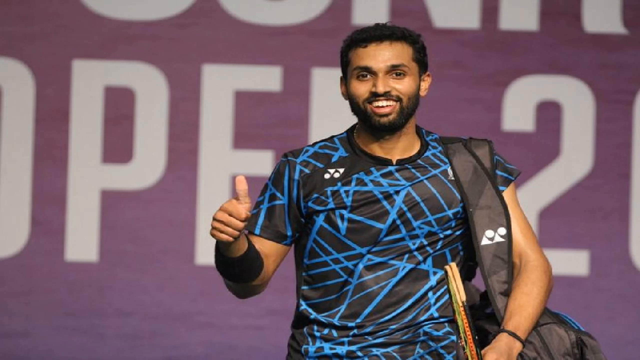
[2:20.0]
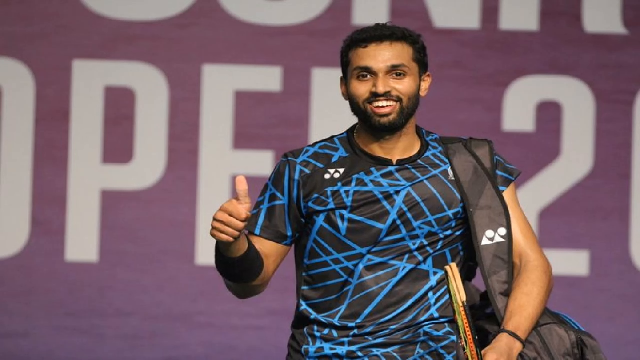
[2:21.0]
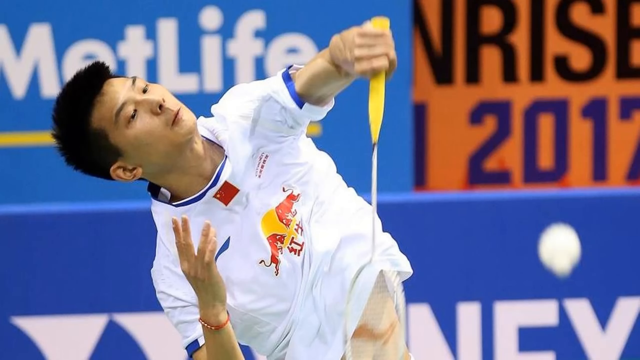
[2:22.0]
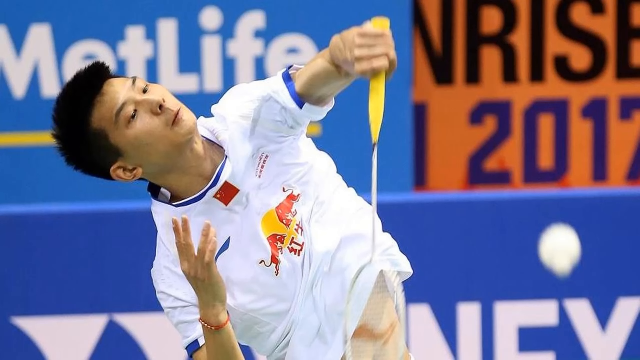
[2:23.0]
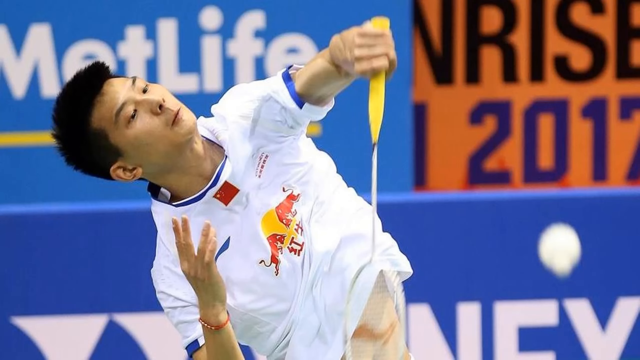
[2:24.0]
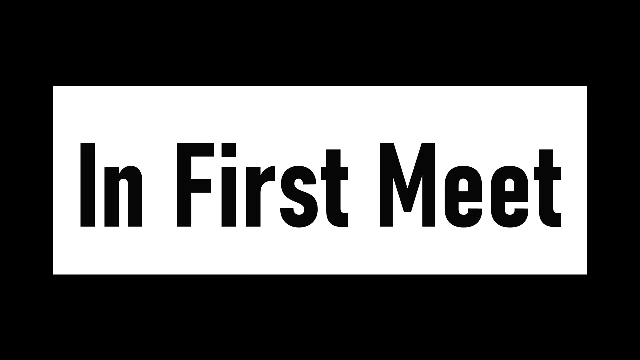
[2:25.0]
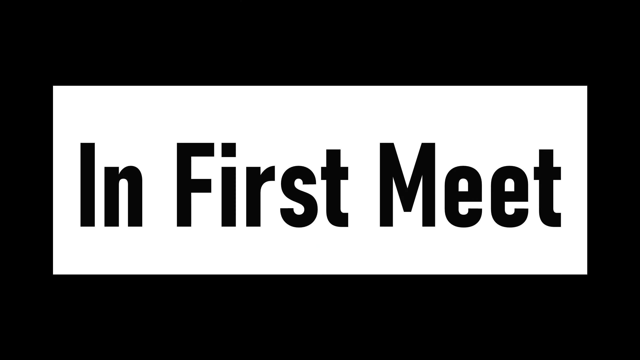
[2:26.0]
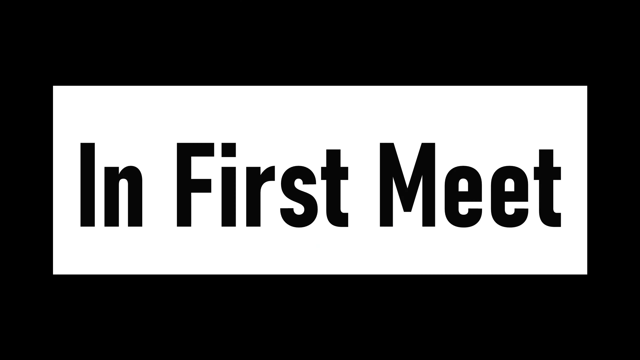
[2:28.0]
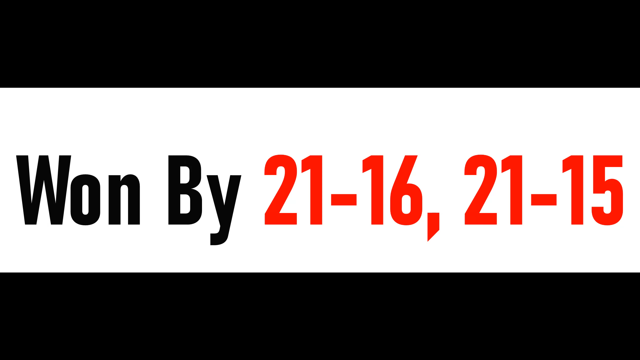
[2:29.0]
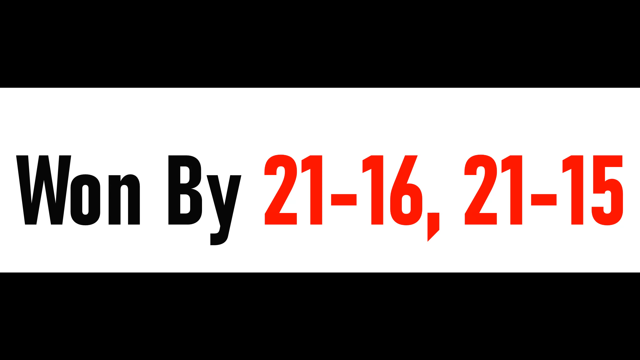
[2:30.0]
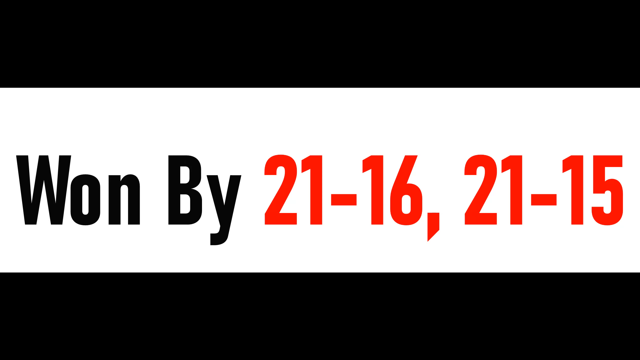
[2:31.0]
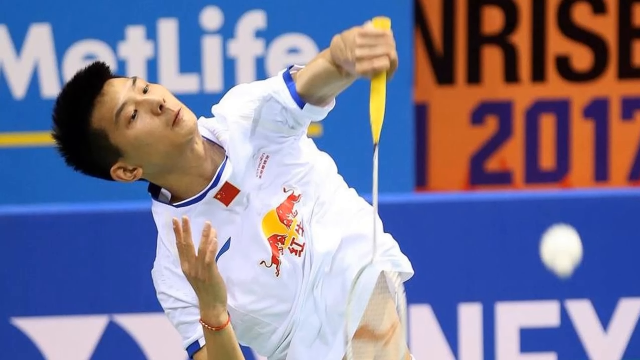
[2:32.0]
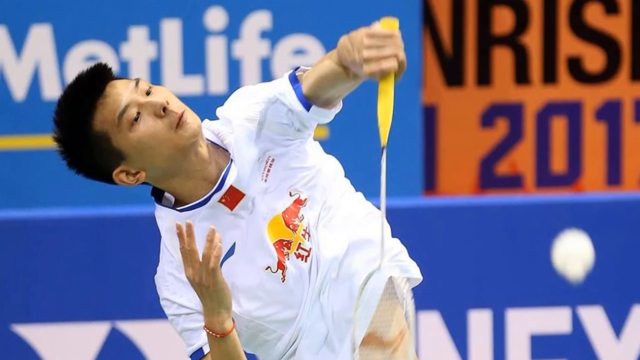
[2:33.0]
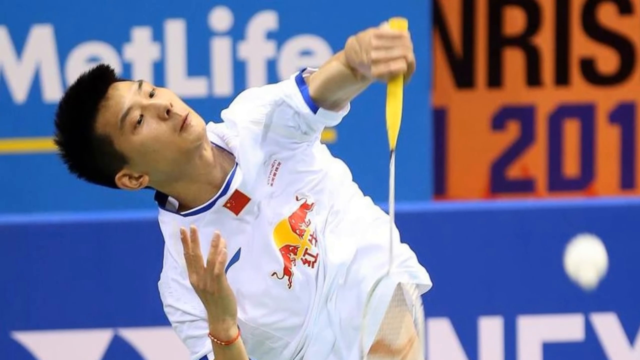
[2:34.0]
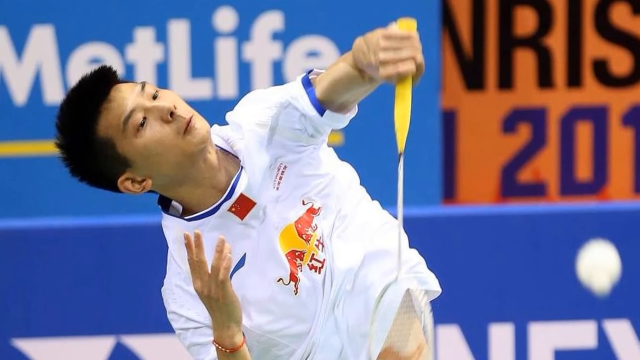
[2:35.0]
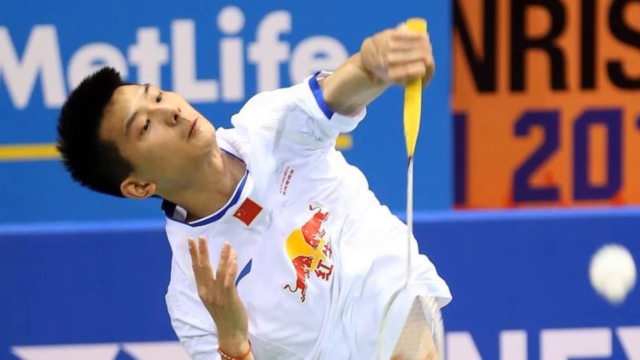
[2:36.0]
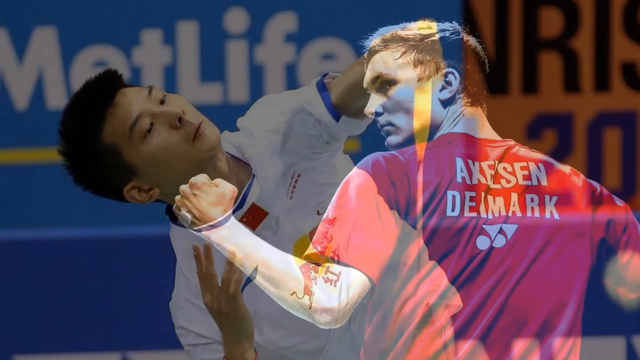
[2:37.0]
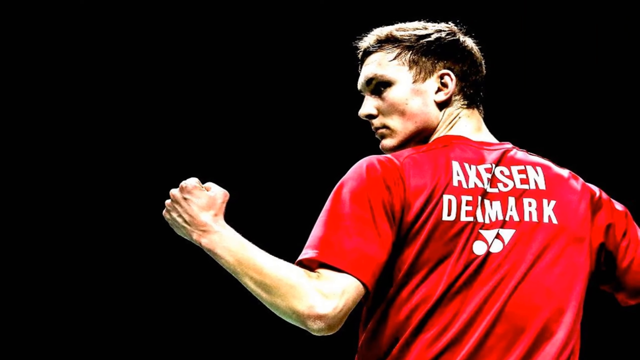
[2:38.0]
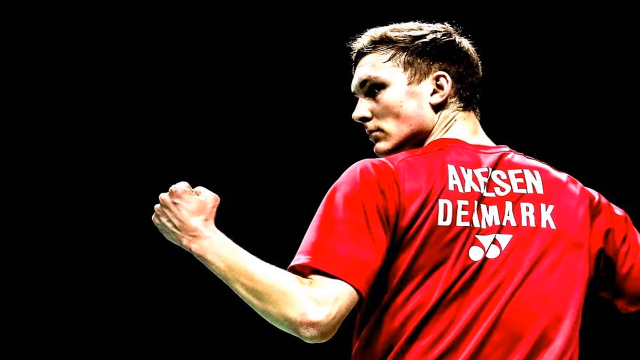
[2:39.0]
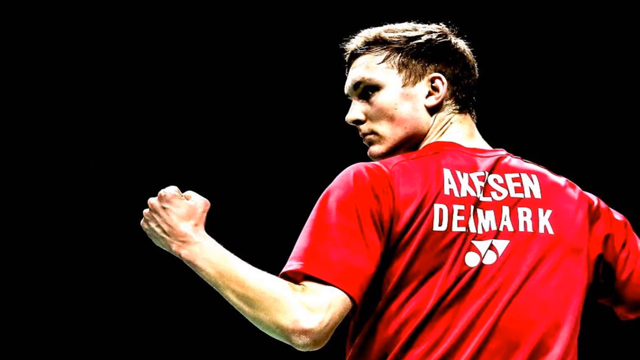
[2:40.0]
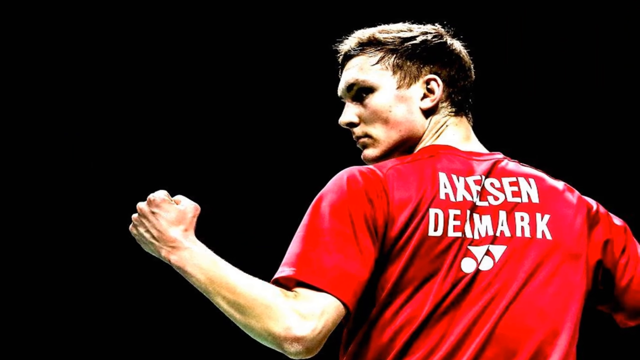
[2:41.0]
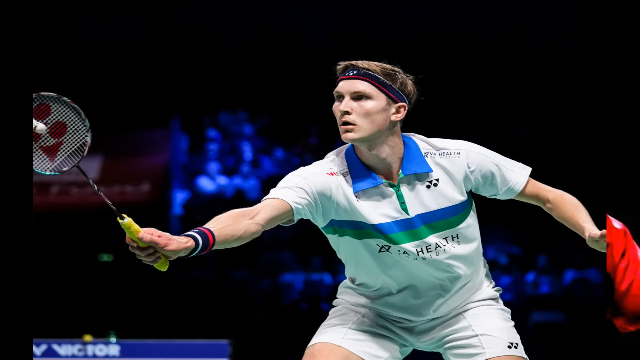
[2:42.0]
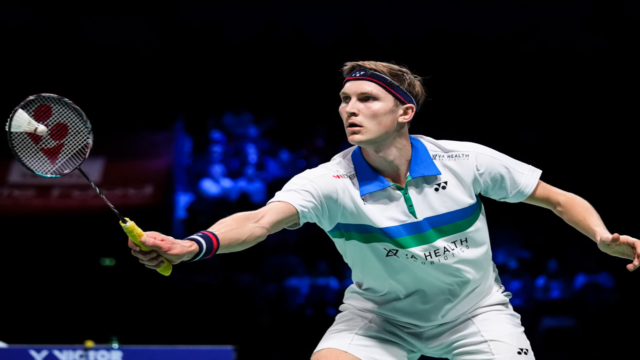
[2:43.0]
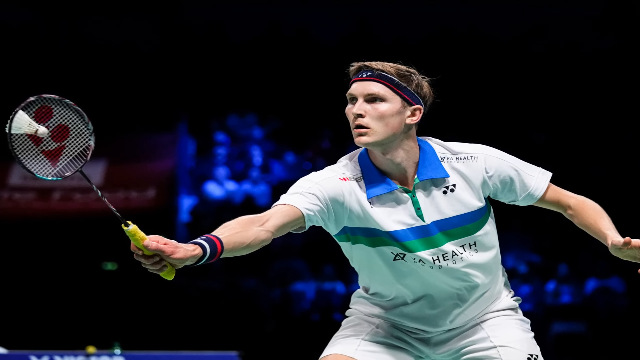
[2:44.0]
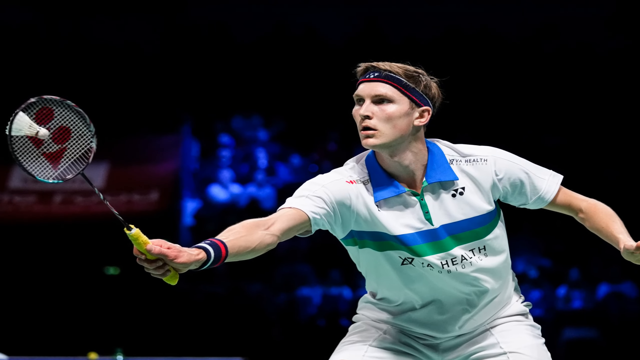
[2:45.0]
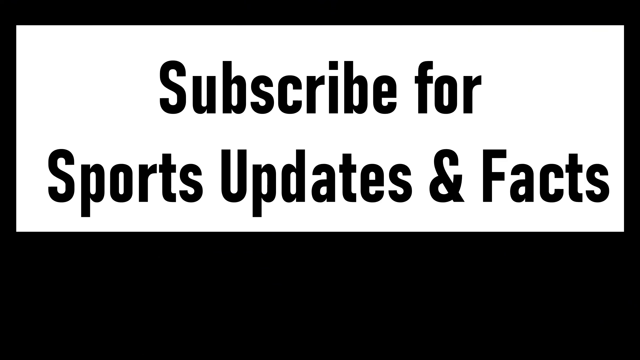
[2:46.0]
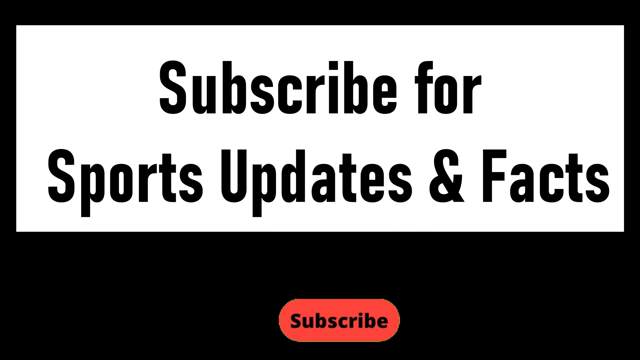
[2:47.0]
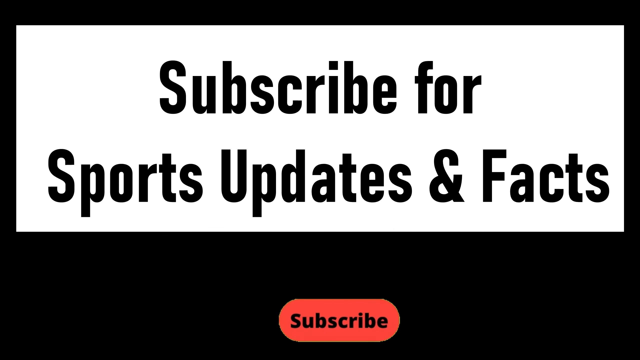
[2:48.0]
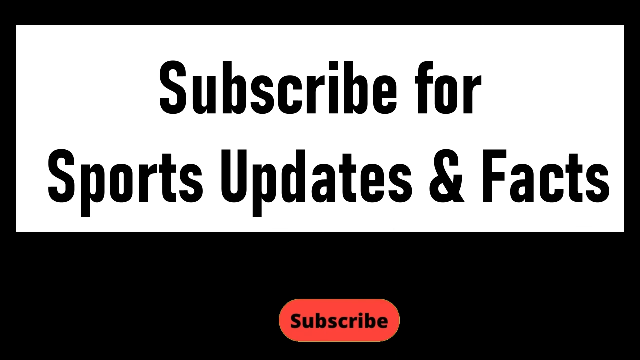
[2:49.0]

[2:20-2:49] Some kind of mural with writing on a purple background is in the background. A guy has some kind of strap over his shoulder attached to a bag and wears a black and blue, somewhat silky jersey. He looks slightly Middle Eastern, has a beard and a mustache, and gives a thumbs up. Next, an Asian guy who looks like he is playing badminton holds a racket downward by its handle; he wears a white shirt. It could be the Olympics, and advertisements such as MetLife are behind him. Text appears beginning "in first meet" followed by the numbers "2116, 2115". The view flashes back to the badminton player. A guy in a red jersey that says "Aksen, Denmark" has a stern look and makes a fist against a black background. Another badminton player appears in an action shot with the birdie in front of the racket; he wears a headband and a white shirt with a blue collar. Text then reads "subscribe for sports updates and facts".